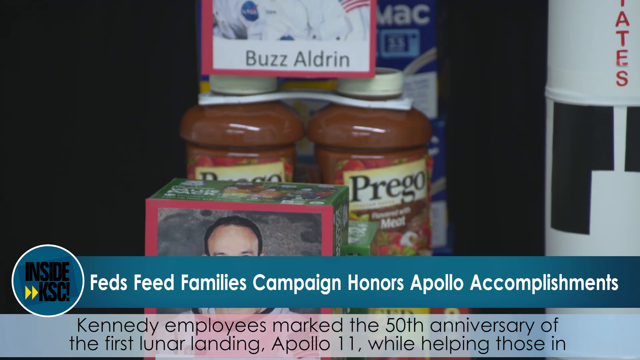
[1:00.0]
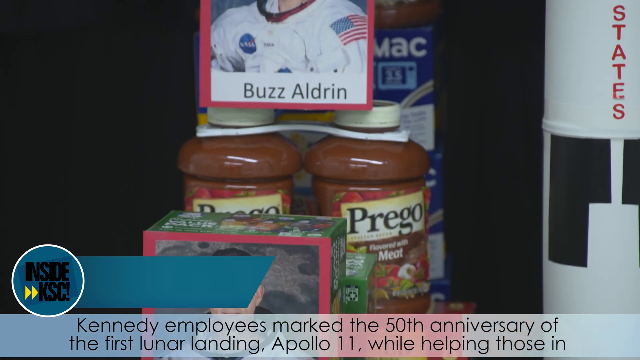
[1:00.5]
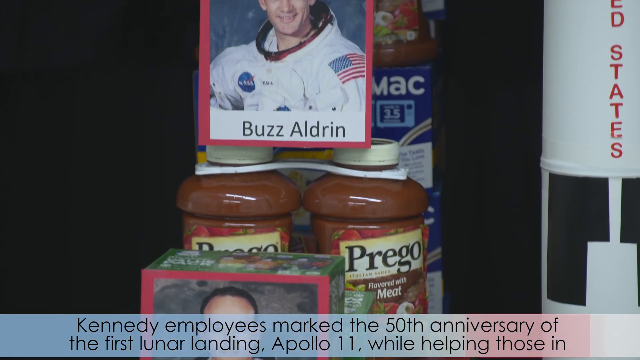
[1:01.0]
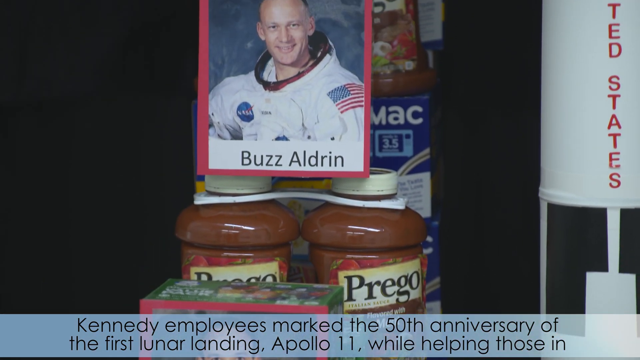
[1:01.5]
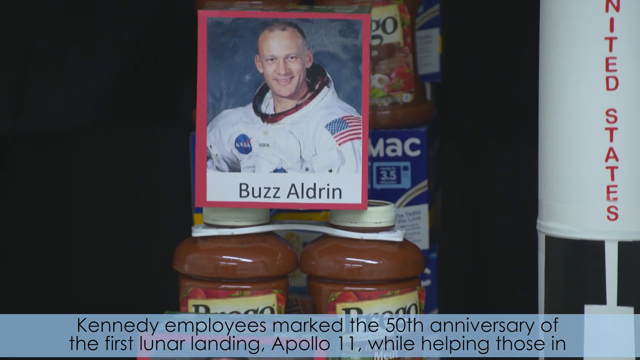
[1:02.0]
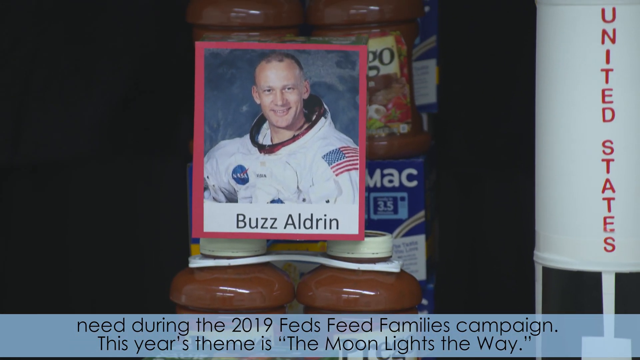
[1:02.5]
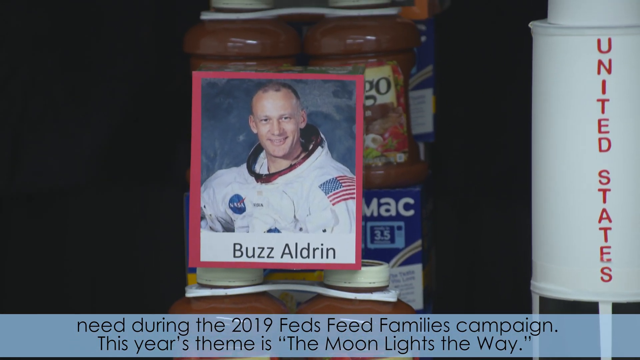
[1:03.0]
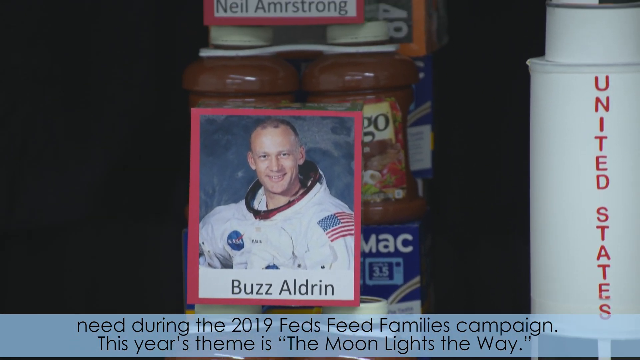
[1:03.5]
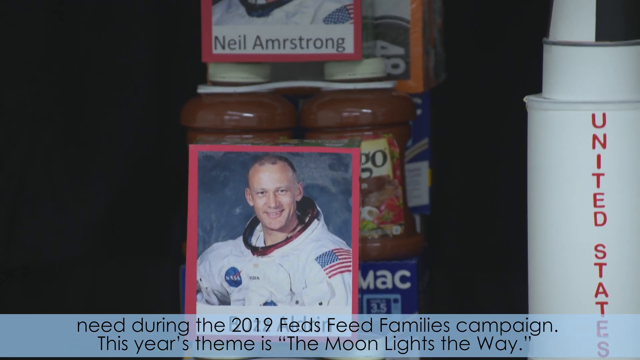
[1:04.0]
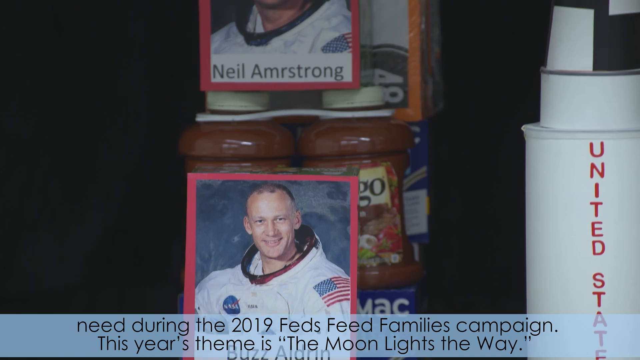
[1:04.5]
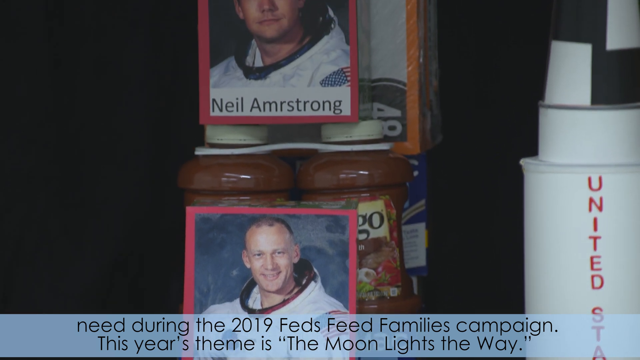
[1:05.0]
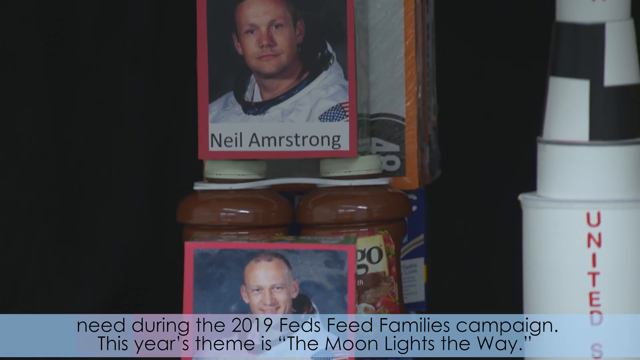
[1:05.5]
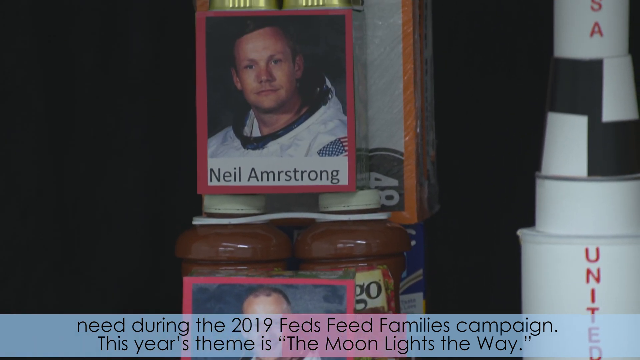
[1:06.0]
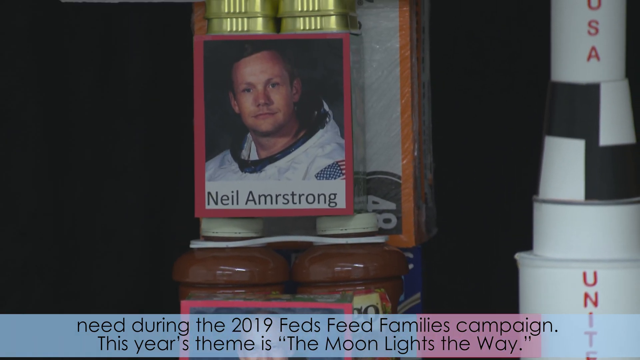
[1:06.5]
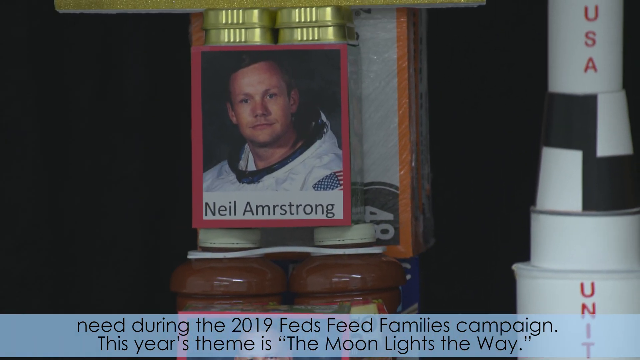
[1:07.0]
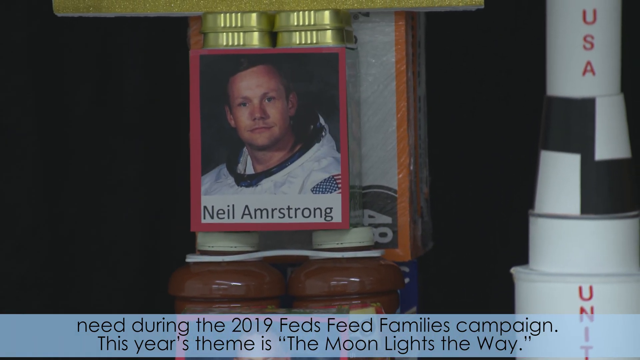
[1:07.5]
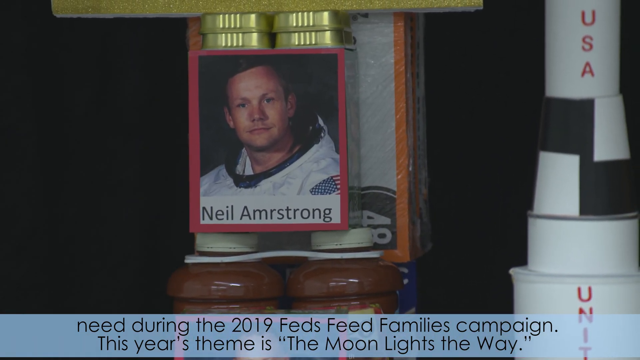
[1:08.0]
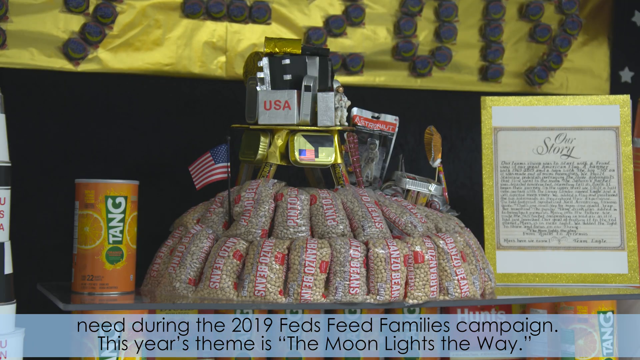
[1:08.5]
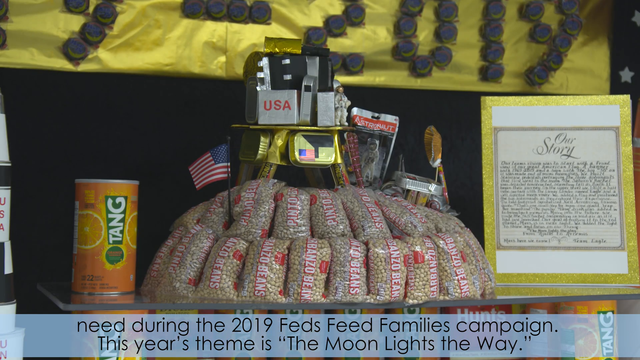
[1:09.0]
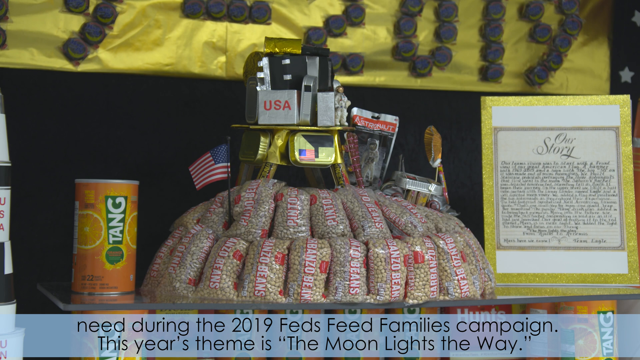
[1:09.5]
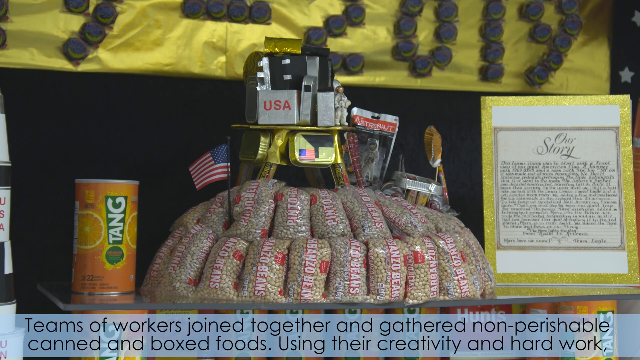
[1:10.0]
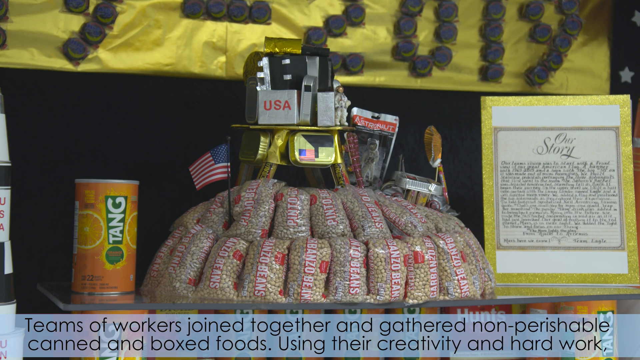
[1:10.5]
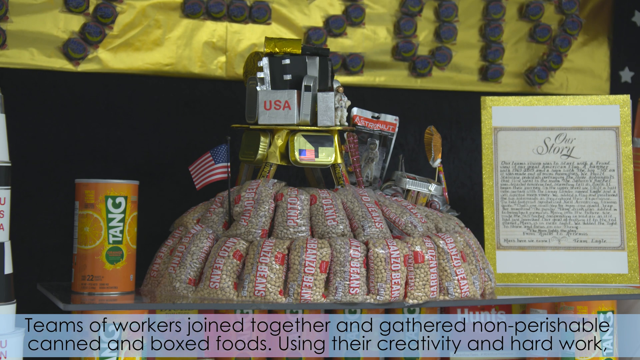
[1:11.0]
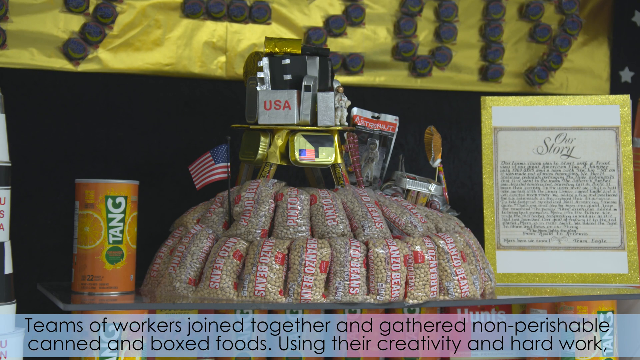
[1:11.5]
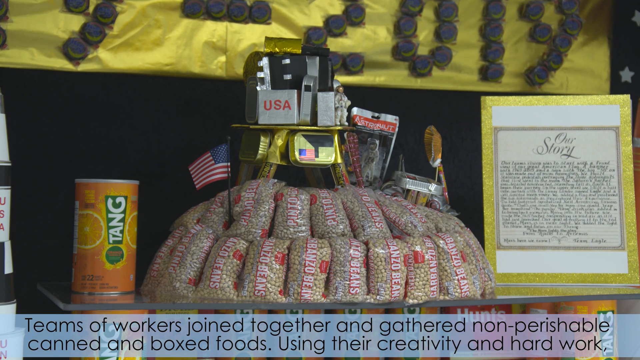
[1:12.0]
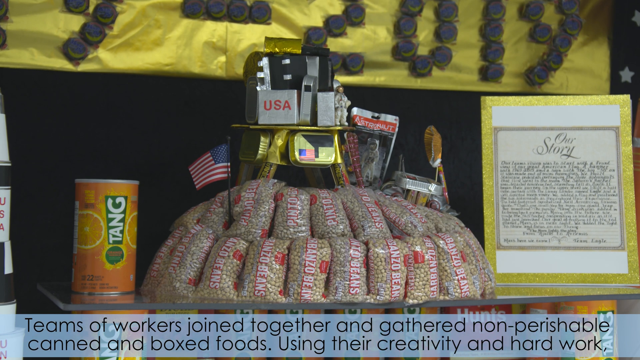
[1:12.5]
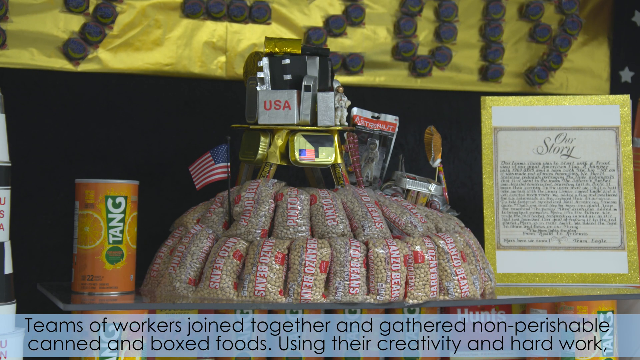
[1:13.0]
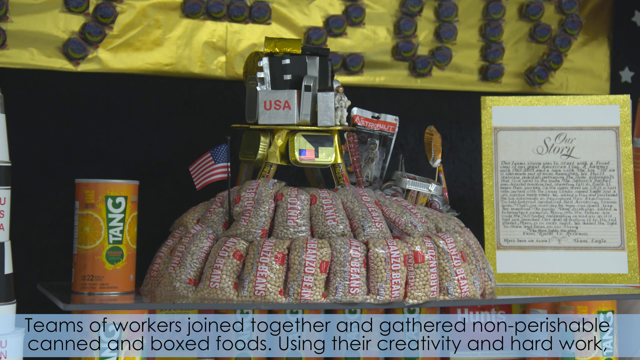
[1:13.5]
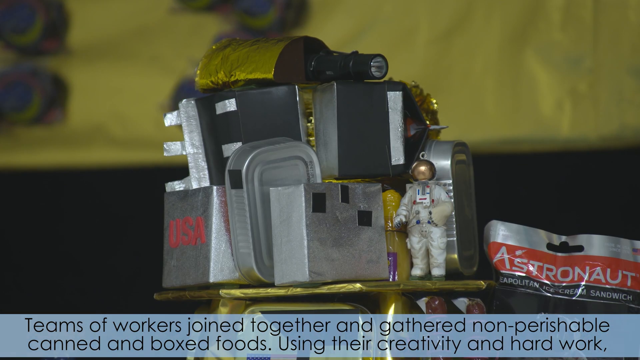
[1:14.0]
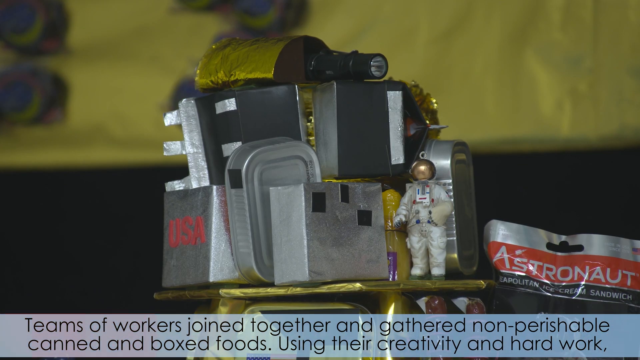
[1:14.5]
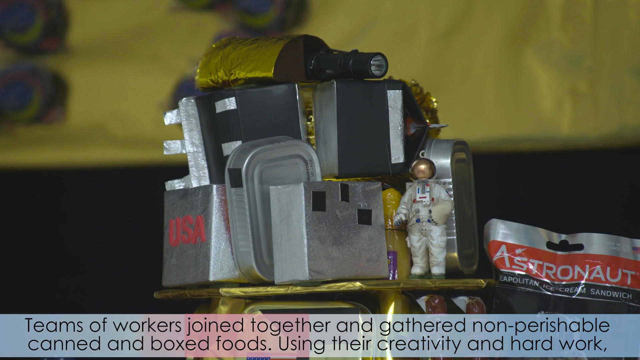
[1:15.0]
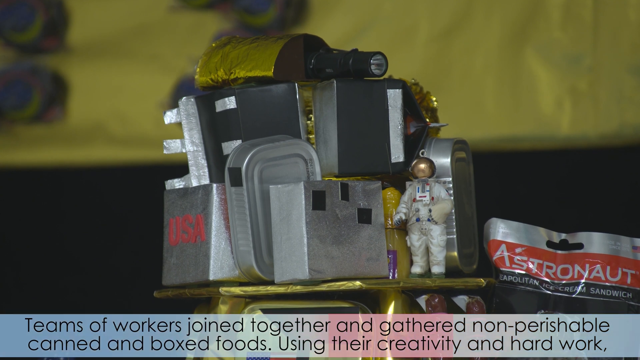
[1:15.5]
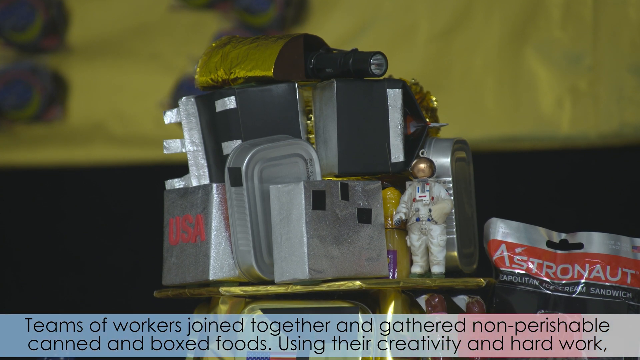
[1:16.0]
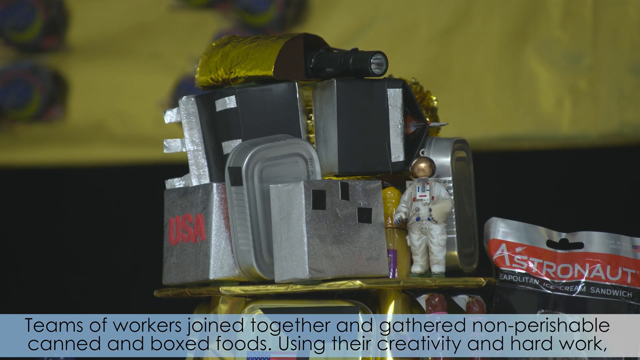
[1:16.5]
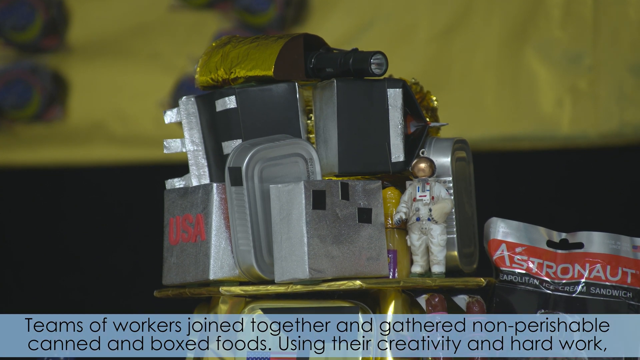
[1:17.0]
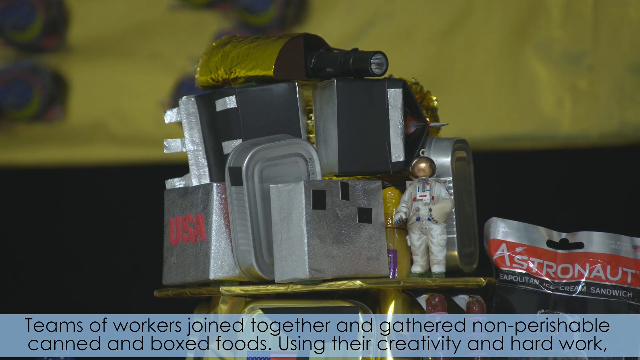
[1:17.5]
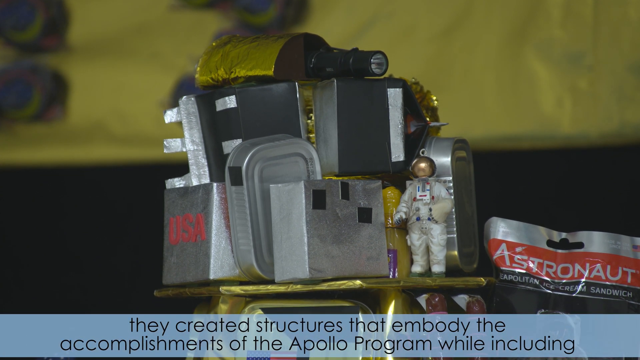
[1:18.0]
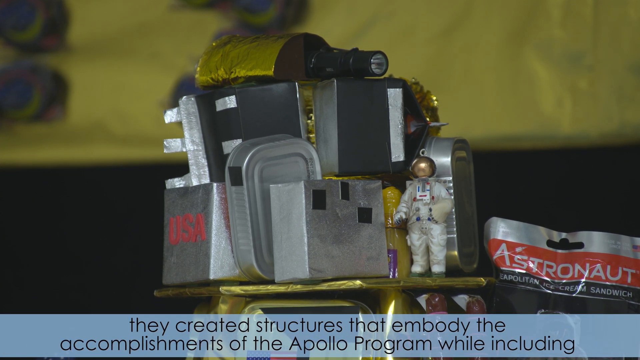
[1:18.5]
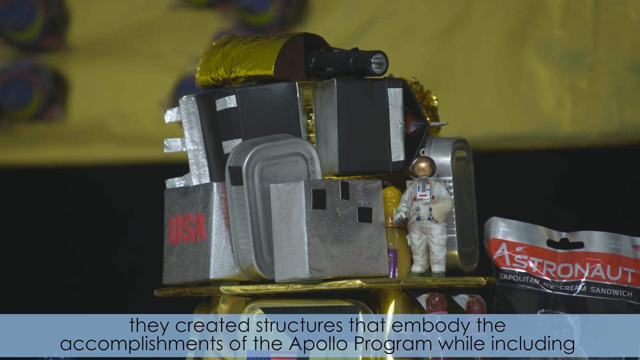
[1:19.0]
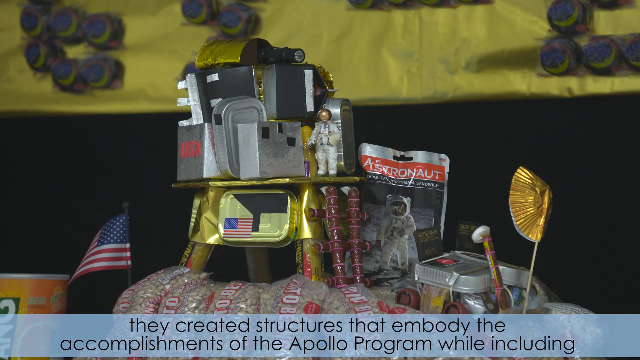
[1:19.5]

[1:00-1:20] A display shows two plastic bottles of Prego spaghetti sauce with a photo of Buzz Aldrin attached to them on top. Behind the jars of sauce there seem to be boxes of pasta and additional jars of sauce. Moving upward, there is a photo of Neil Armstrong, followed by gold tins placed upside down. The video cuts to a different display with bags of garbanzo beans piled into a sort of pyramid shape. To the left of them on the same display is a large tank canister, and at the top of the display, coming from the center of the garbanzo bean bag pyramid, are multiple metal tins that are either gold or silver in color. Text at the bottom reads "teams of workers joined together and gathered non-perishable canned and boxed foods using their creativity and hard work". The video zooms in on the top of the pyramid display, showing the various tins, a small figurine of an astronaut, and a freeze-dried bag that reads "Astronaut Neapolitan Ice Cream Sandwich". The text changes to "They created structures that embody the accomplishments of the Apollo program while including,".